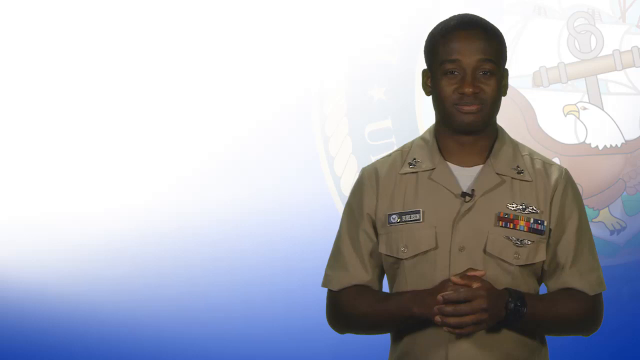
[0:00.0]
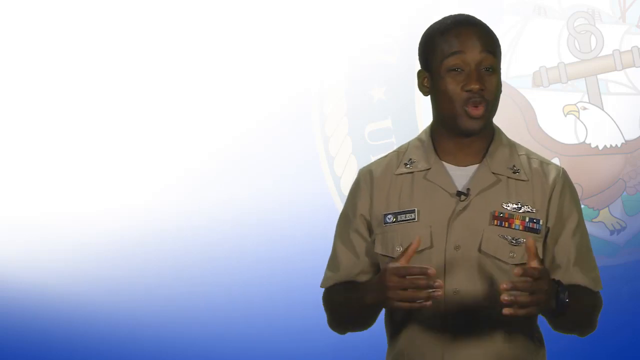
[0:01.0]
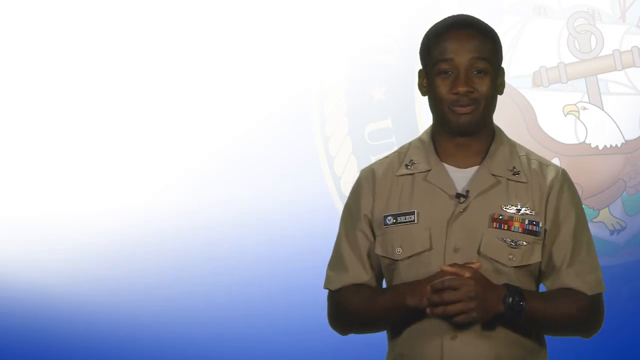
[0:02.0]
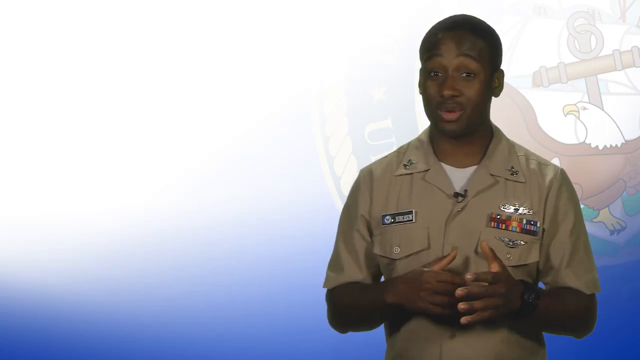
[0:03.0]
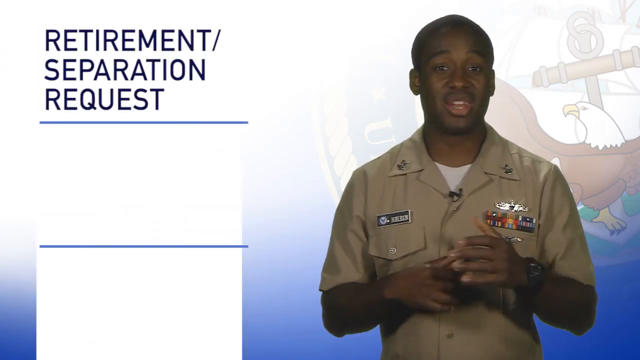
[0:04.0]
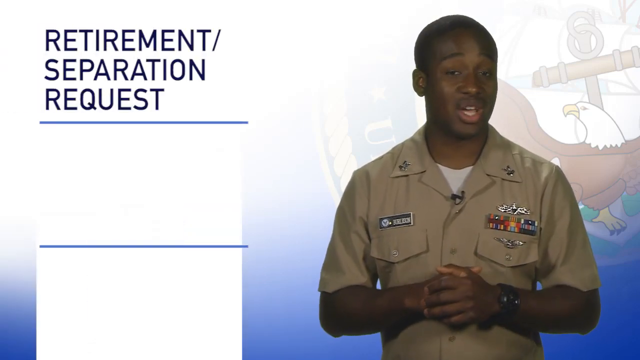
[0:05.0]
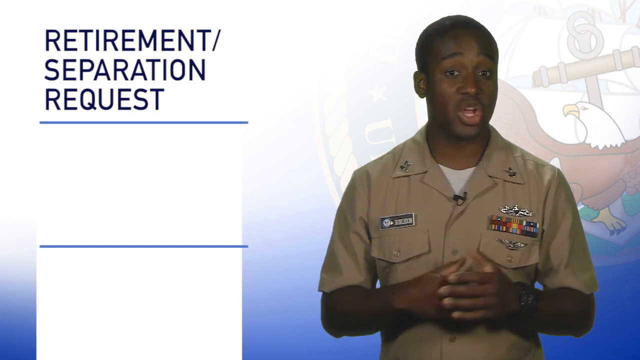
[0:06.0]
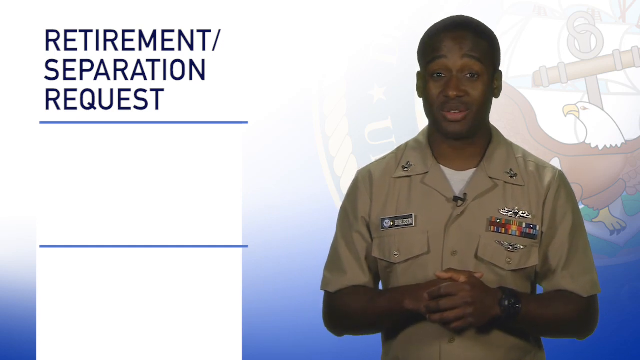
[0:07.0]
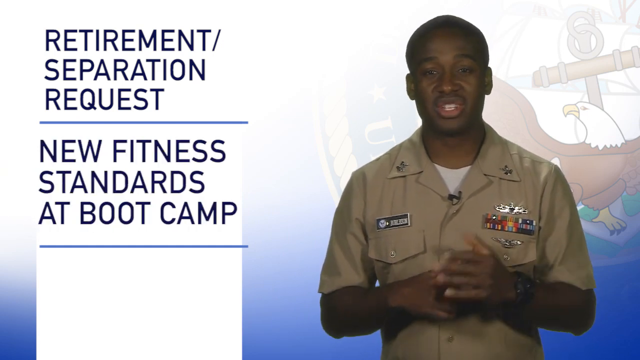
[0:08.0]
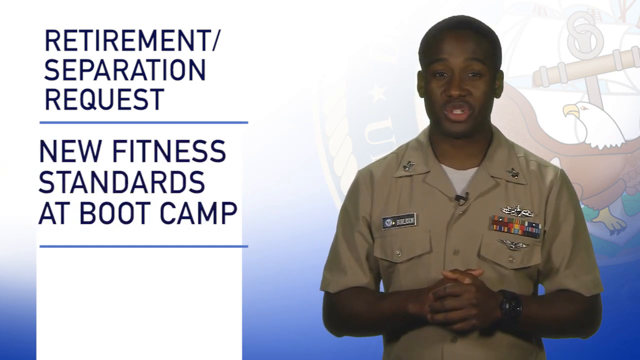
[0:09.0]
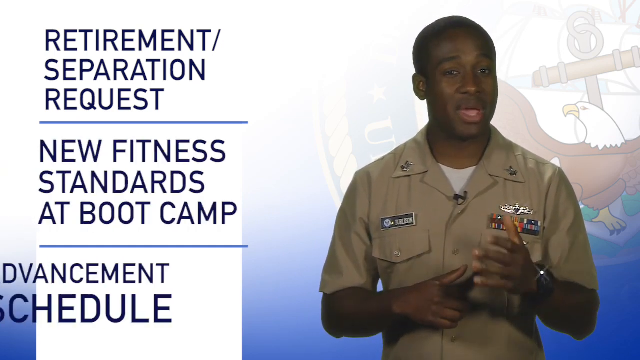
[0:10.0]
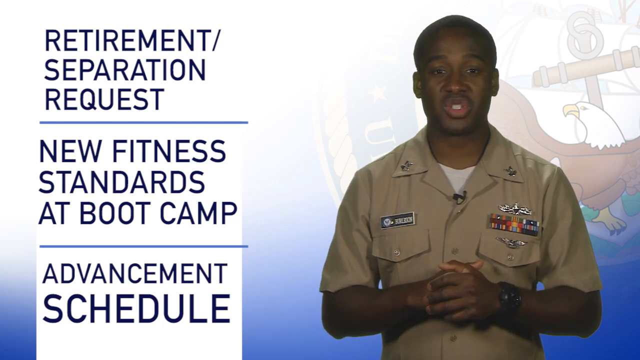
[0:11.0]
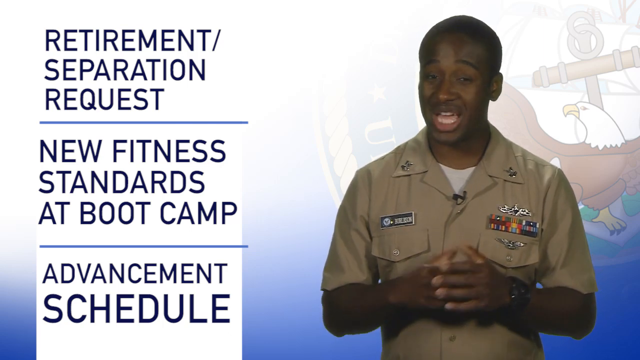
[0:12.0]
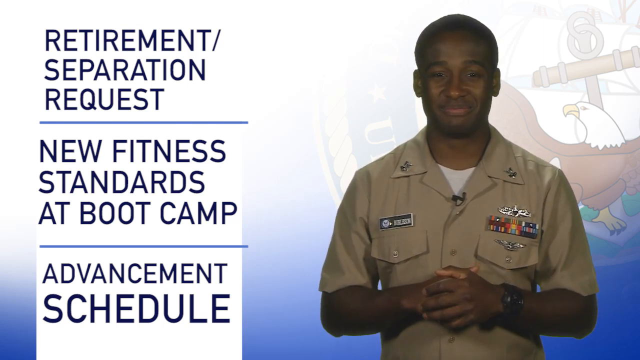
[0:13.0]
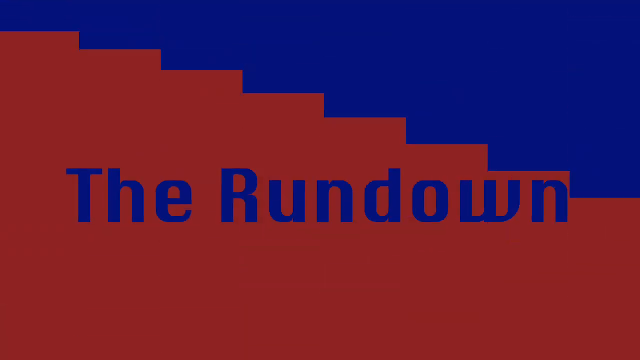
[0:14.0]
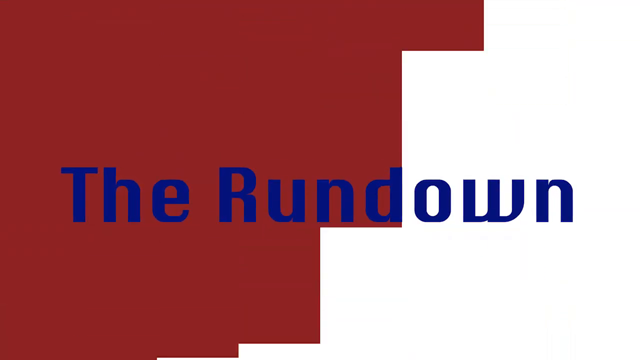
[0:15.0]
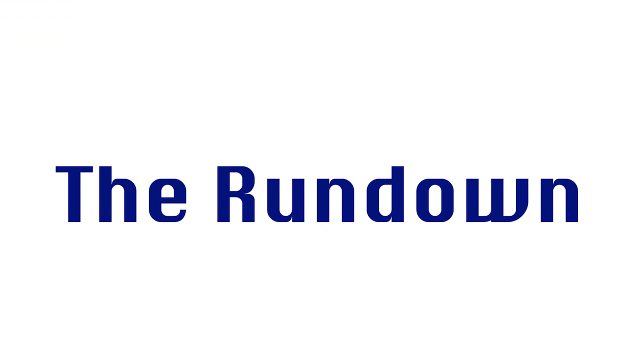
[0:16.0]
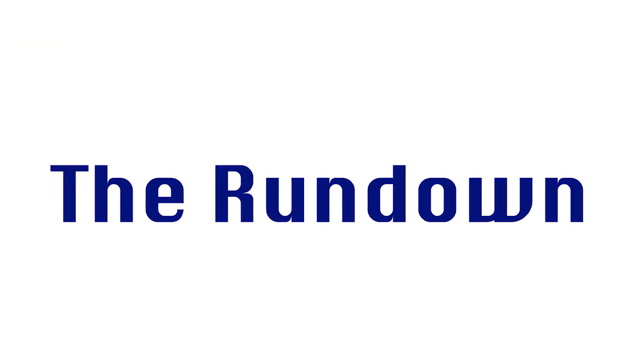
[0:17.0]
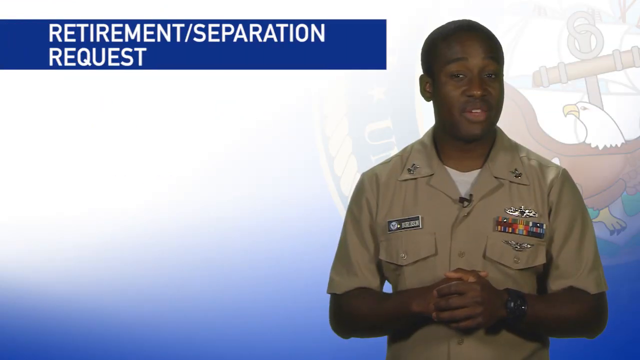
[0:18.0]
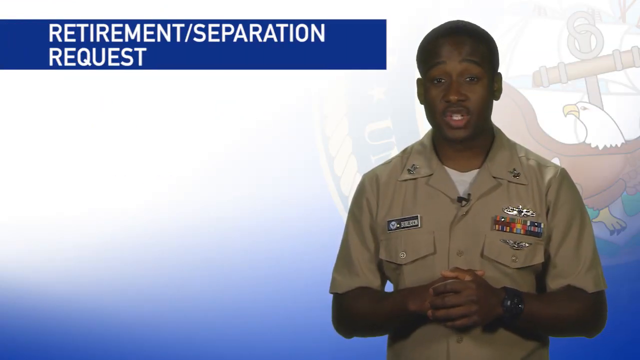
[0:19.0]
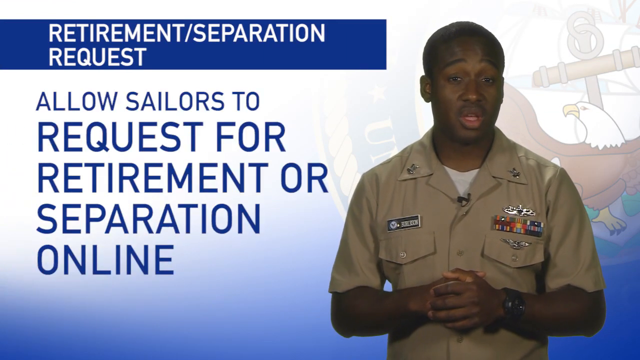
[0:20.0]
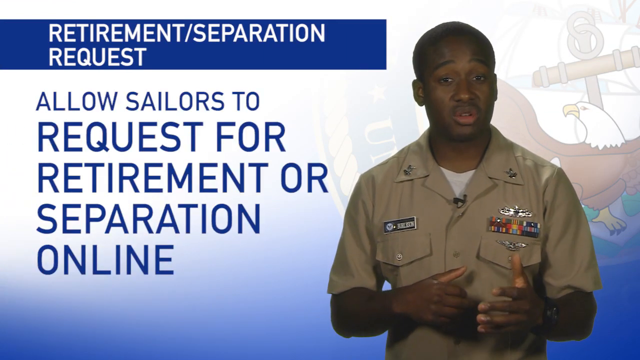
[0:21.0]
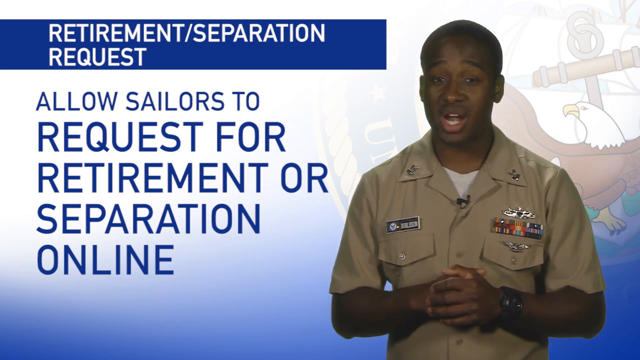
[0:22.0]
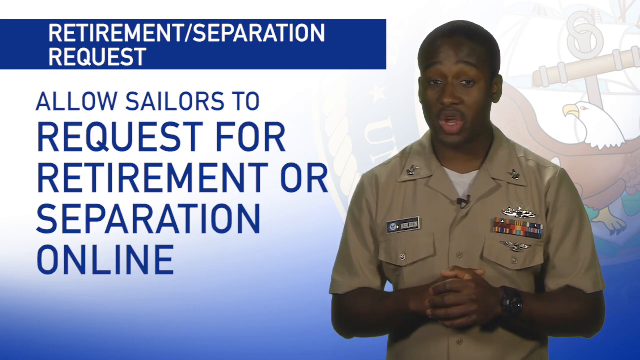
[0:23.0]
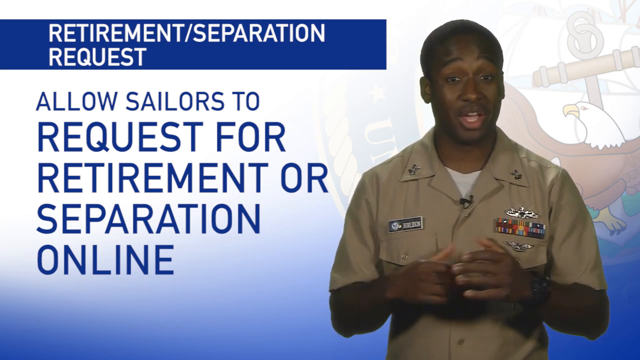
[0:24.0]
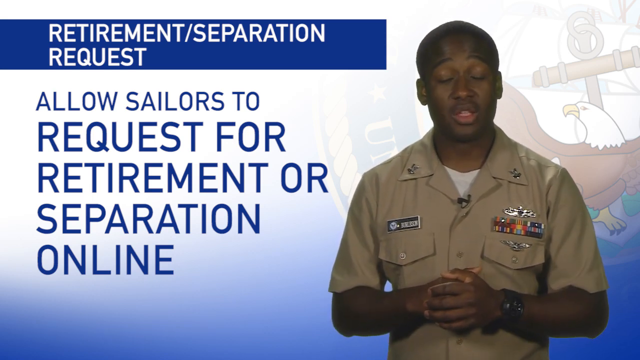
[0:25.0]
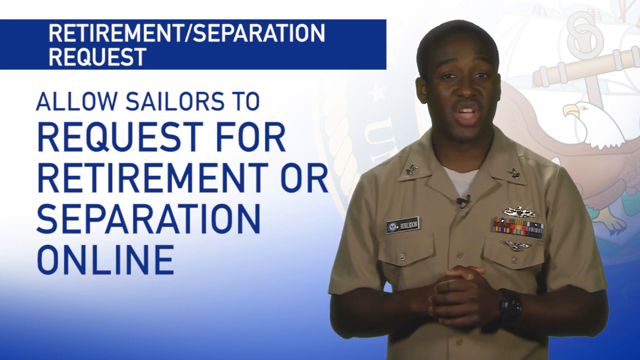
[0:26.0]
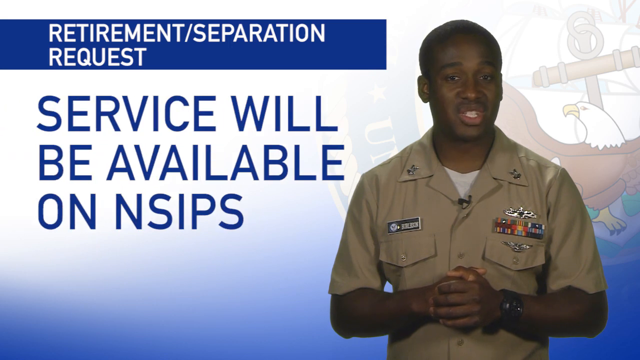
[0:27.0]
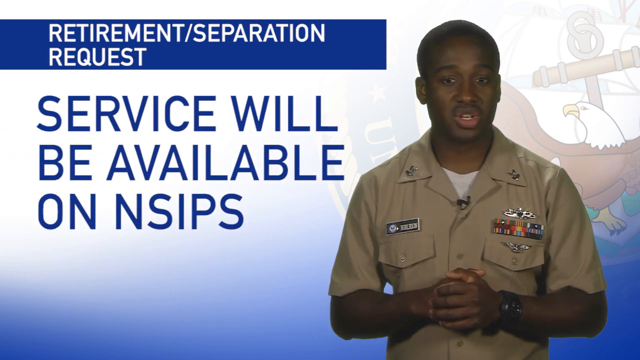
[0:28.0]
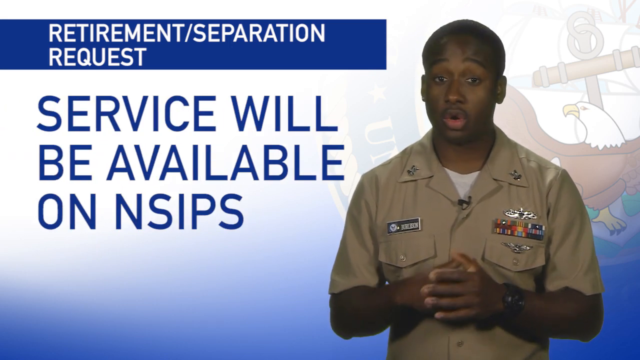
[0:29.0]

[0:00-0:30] A Black man in an army uniform speaks to the camera. He has several medals on his chest, a buzz cut, and seems pretty young. The screen behind him shows what looks like the US government logo with the eagle. Text appears on the screen reading "retirement separation request," "new fitness standards at boot camp," and "advancement schedule." The writing is dark blue with lighter blue lines, and the background is also light blue and dark blue. A red screen with blue writing then reads "The Rundown"; the red disappears, leaving white with blue letters, and there is a shadow underneath the words "The Rundown." Letters then appear reading "Retirement separation request," with "Allow sailors to request for retirement or separation online" underneath, in blue on a whitish blue background. The man keeps talking and gestures with his hands. The next text on screen says "service won't be available on NSIPS," while the man continues gesturing.